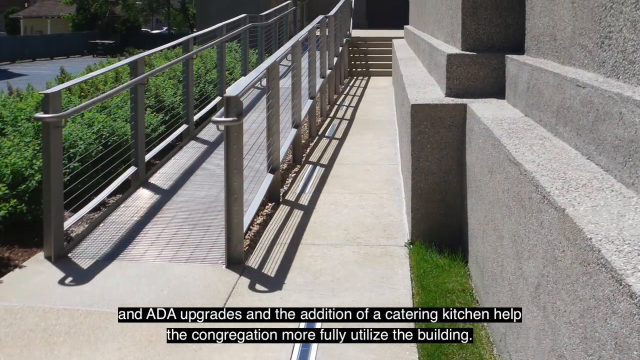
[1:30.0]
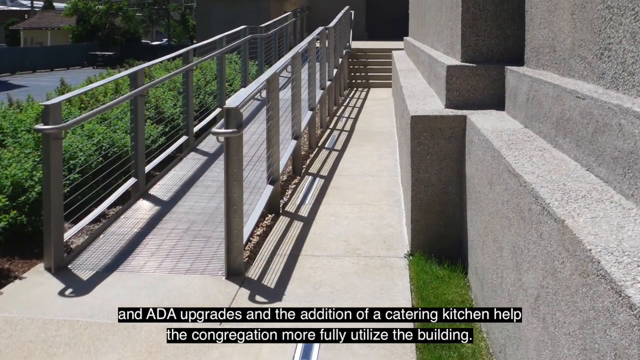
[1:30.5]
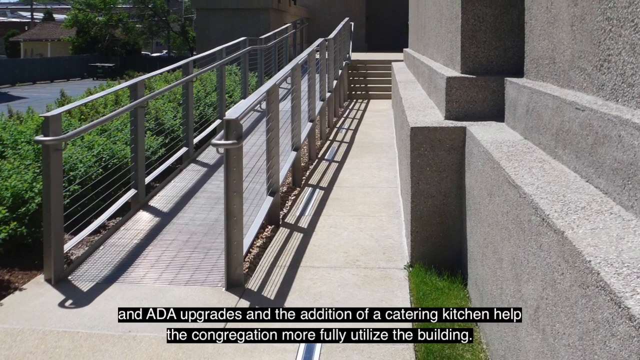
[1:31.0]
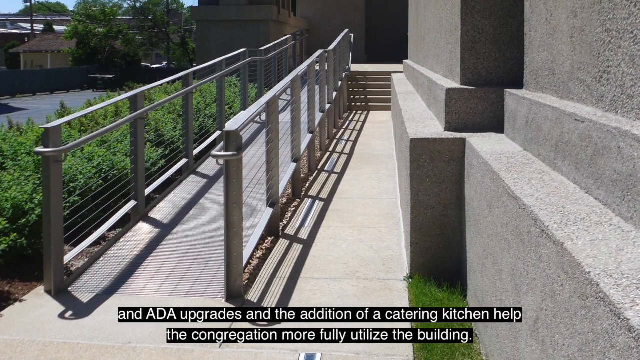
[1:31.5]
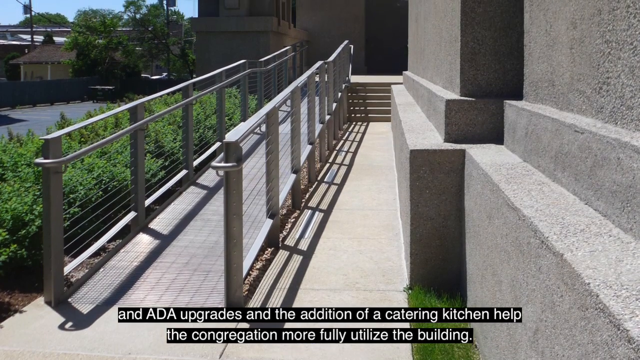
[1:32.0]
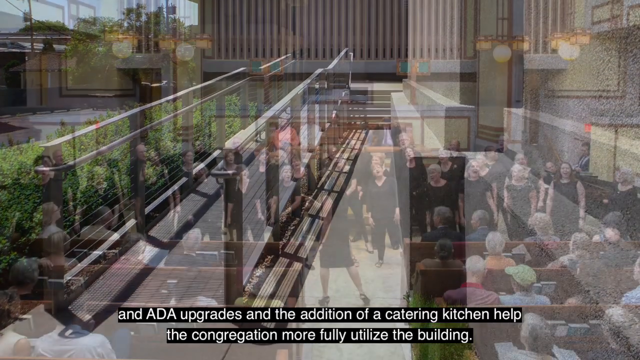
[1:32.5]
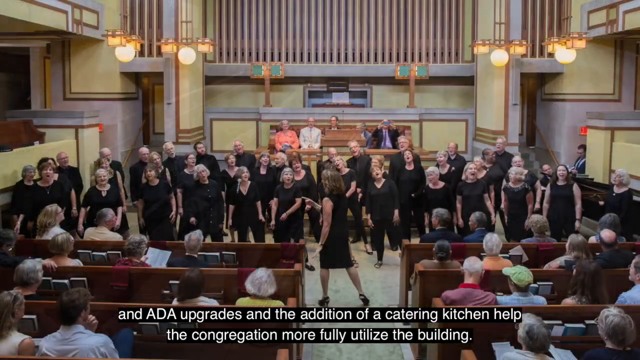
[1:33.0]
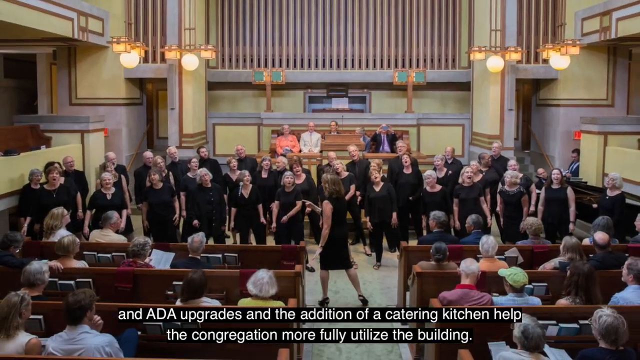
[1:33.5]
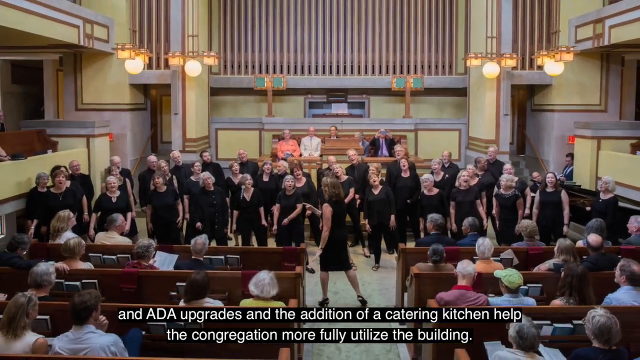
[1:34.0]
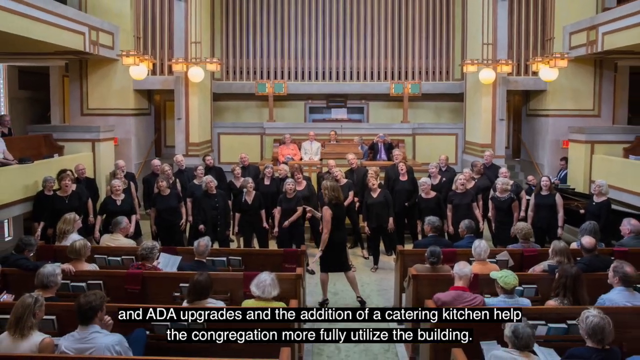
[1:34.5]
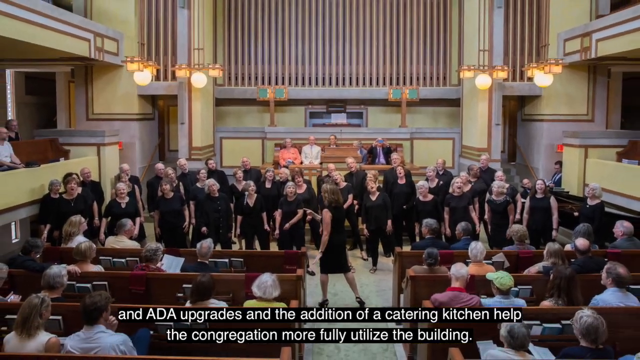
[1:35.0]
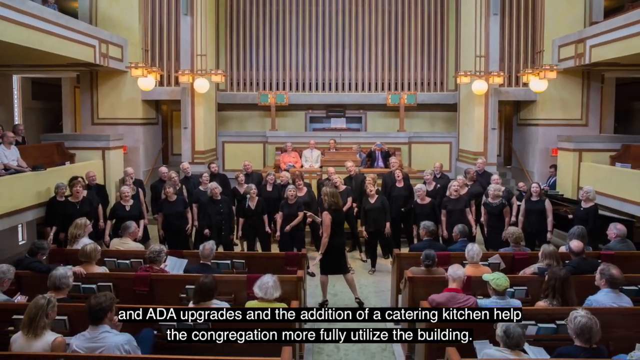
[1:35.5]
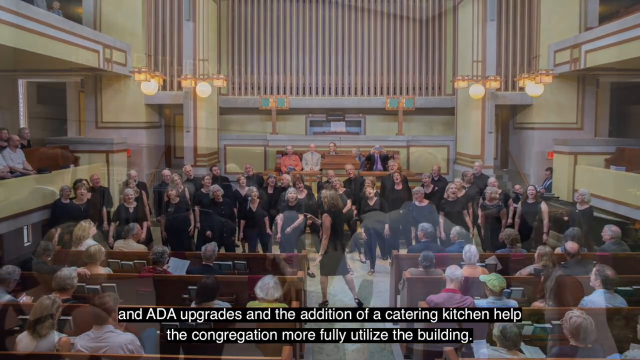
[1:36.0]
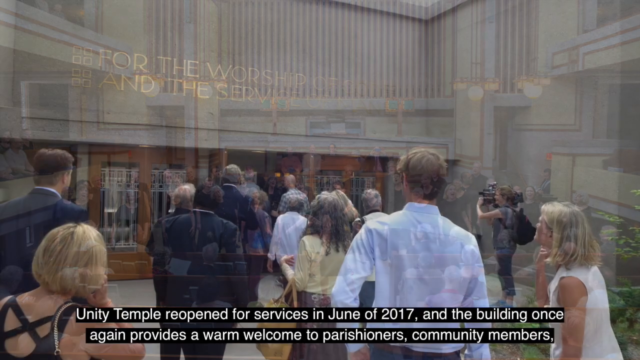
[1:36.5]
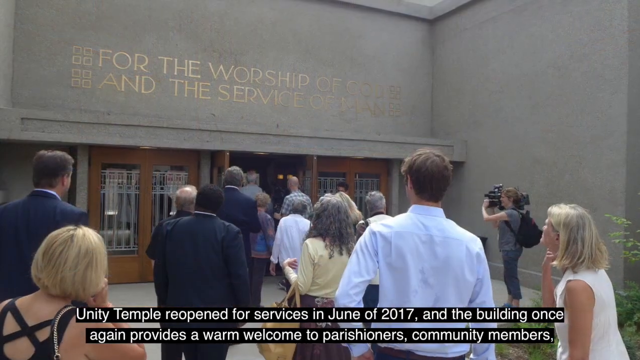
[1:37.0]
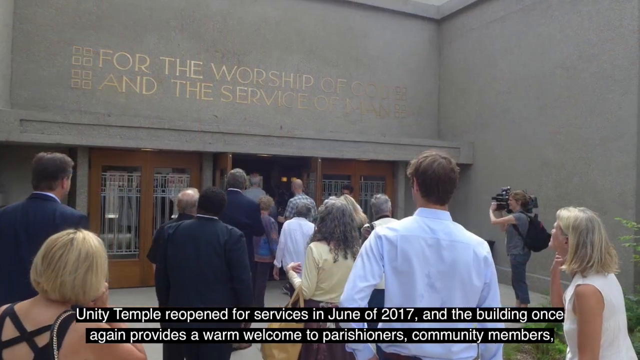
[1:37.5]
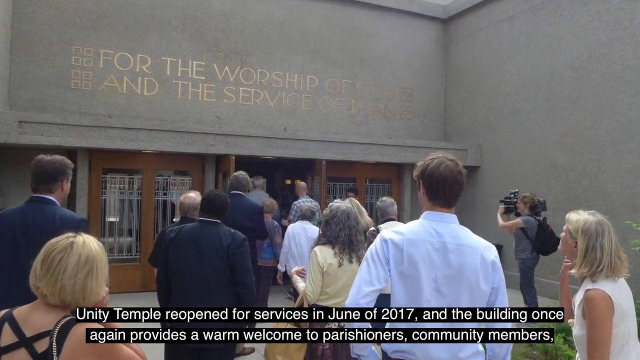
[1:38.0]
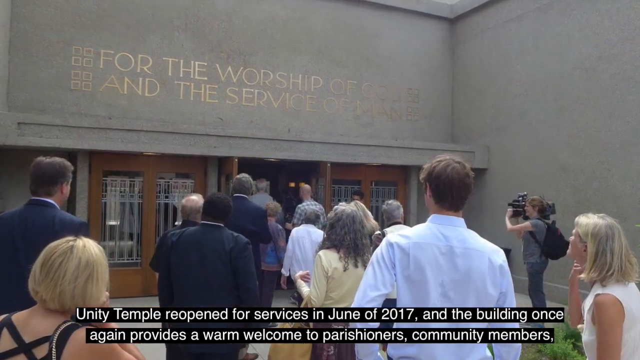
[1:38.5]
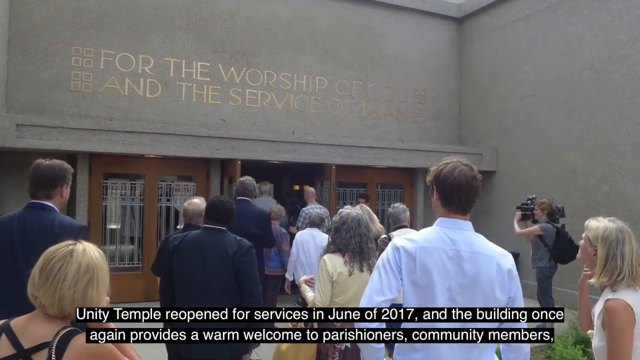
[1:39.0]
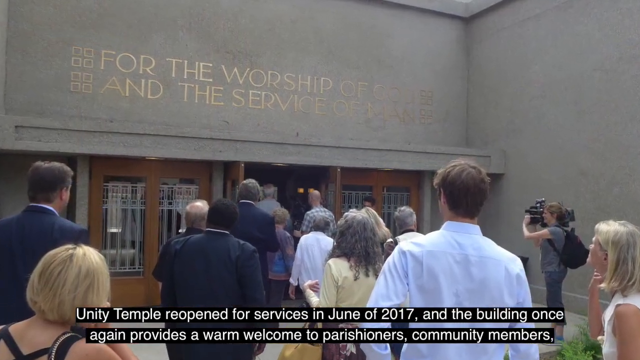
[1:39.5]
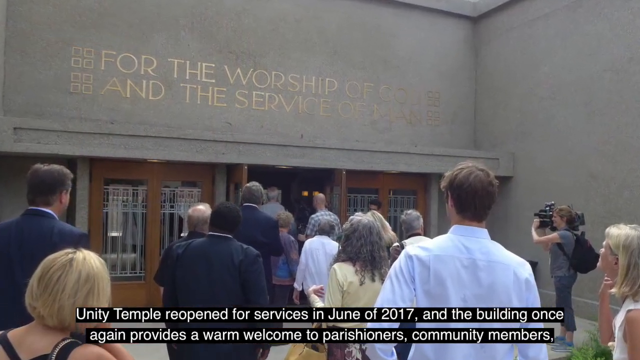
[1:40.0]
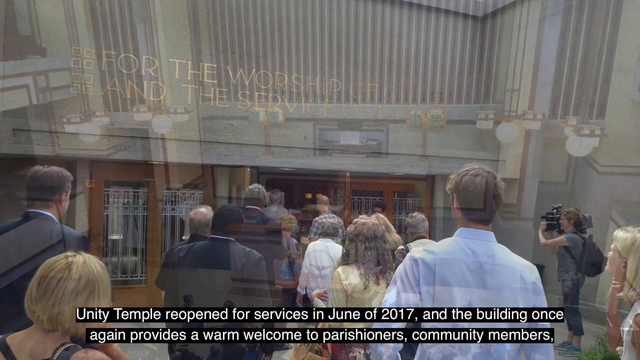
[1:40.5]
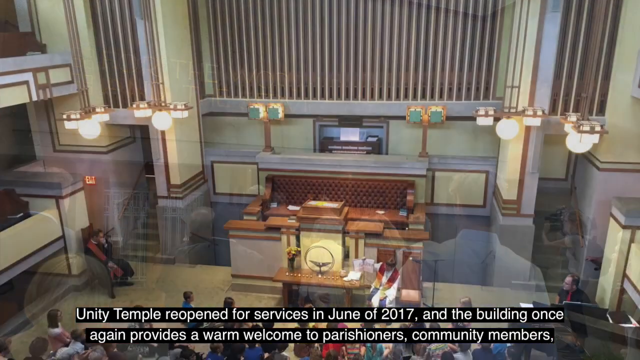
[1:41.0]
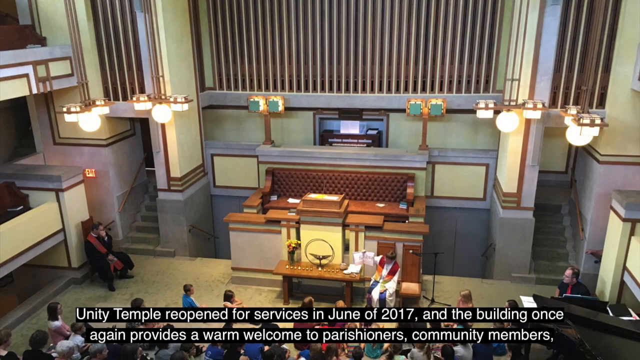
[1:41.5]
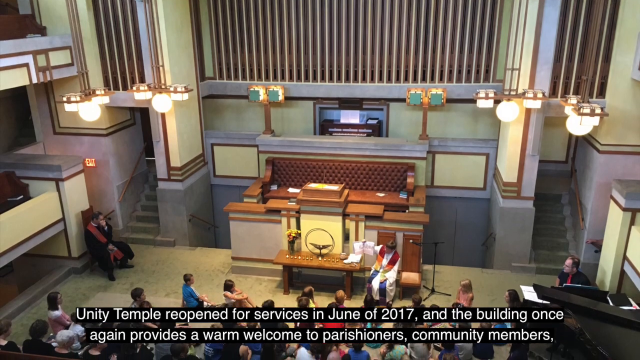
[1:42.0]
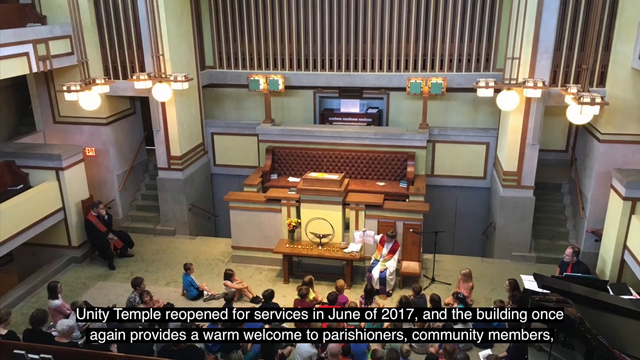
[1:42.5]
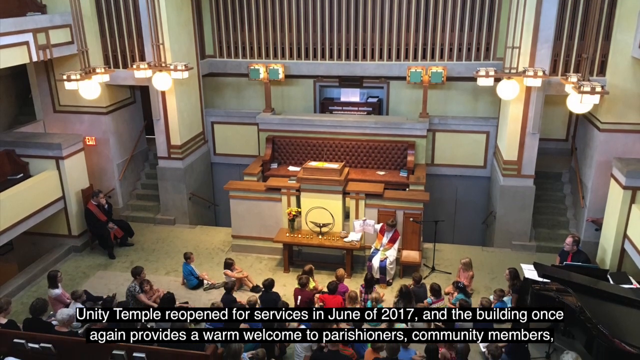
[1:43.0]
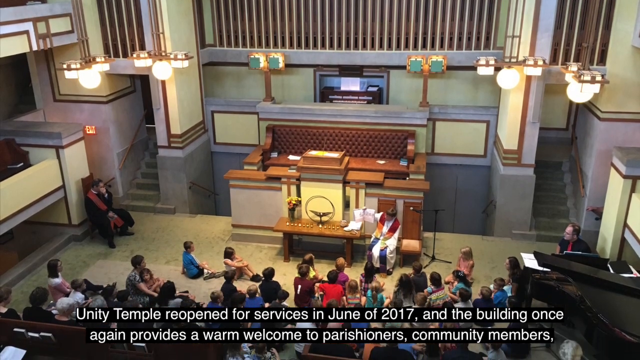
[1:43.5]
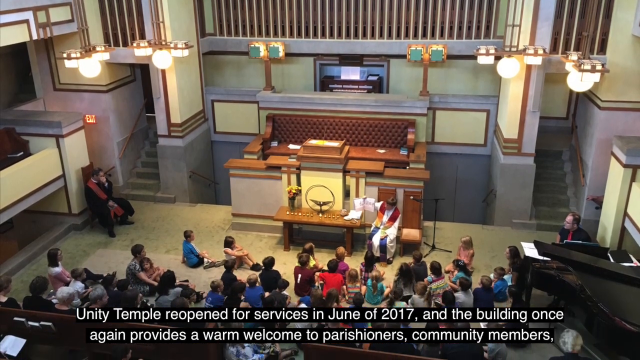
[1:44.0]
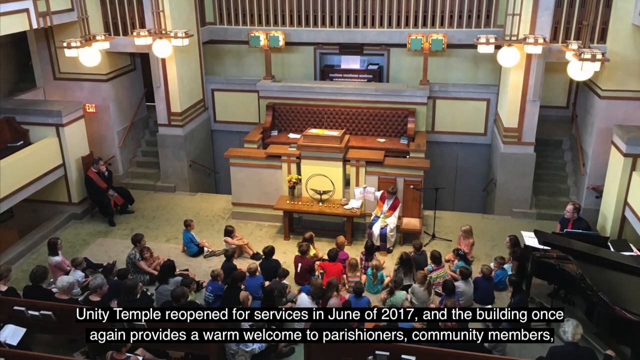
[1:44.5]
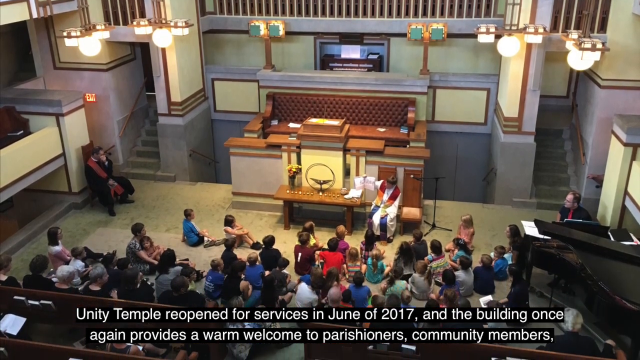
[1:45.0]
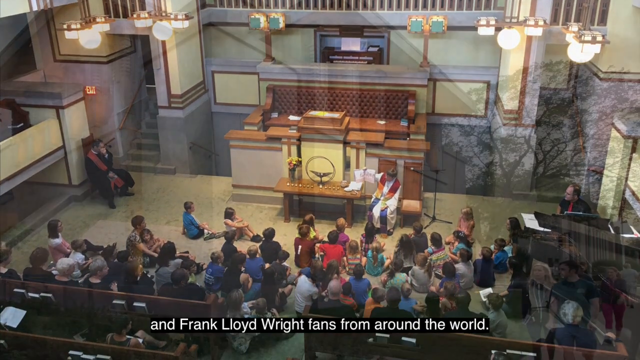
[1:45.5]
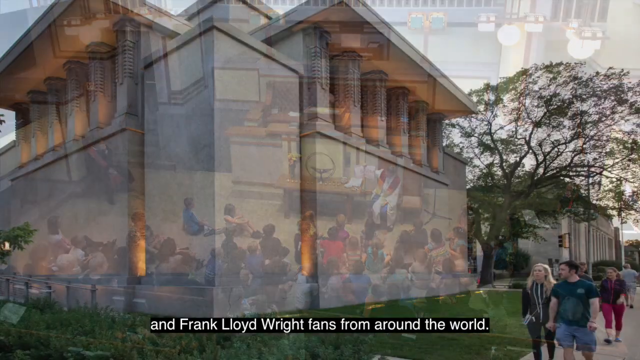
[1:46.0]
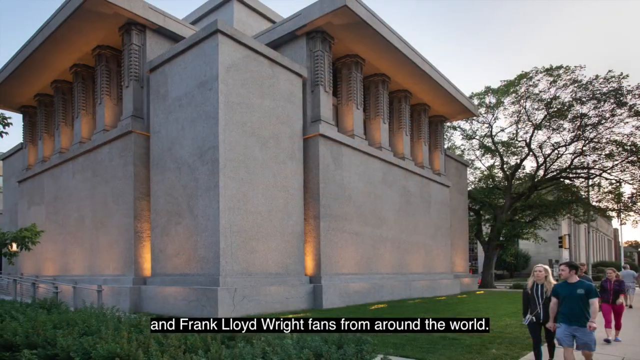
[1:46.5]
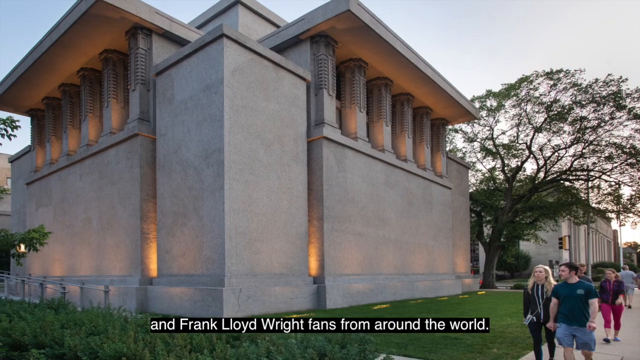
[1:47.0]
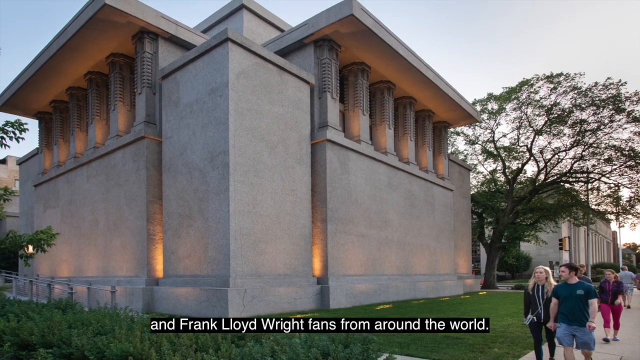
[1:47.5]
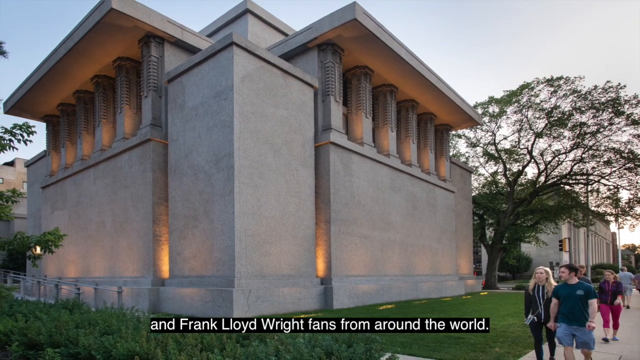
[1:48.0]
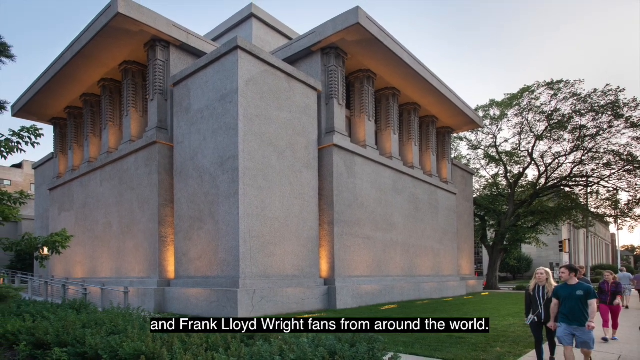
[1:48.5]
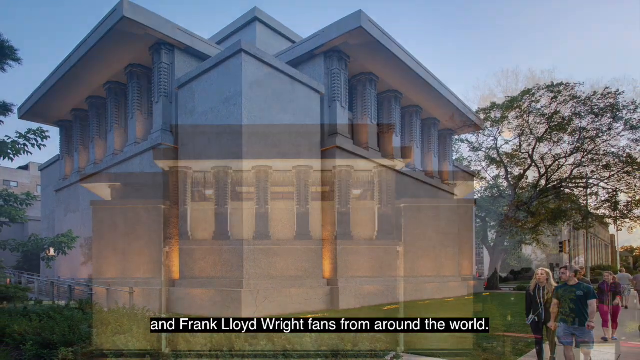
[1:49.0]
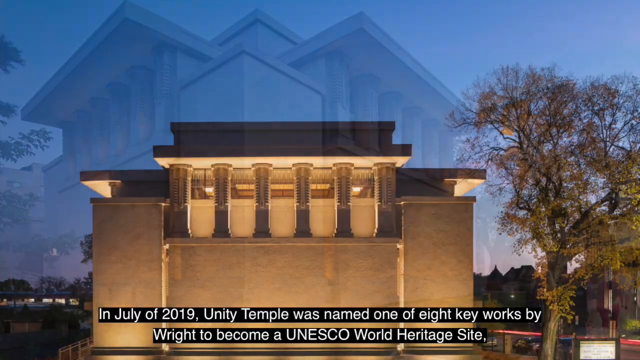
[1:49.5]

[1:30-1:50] A shot shows the new handicap-accessible ramp on the outside of the building. The camera moves inside, where a celebration seems to be taking place. In the front of the downstairs, in front of the pews, is a large group of women in black dresses with some men in black suits behind them; they seem to be a chorus. One woman stands in the front facing them all and seems to be leading them in song. The pews are full of people watching and listening, and music books are on the backs of the pews. The view pans to the outside of the building, where gold lettering against the gray concrete wall says "For the worship of God and the service of man." Another interior shot shows the priest leading children in a service. A last shot shows the exterior at dusk with people walking by. The text underneath reads "Unity Temple reopened for services in June of 2017, and the building once again provides a warm welcome to parishioners, community members, and Frank Lloyd Wright fans from around the world."